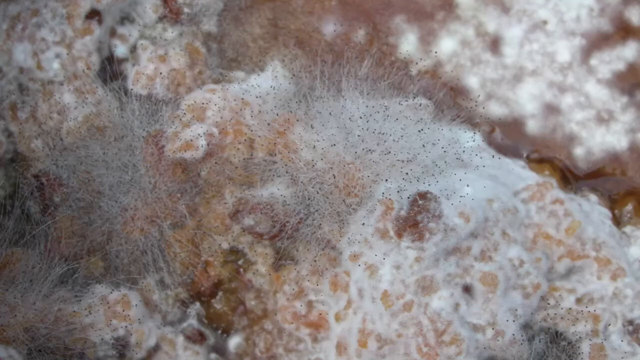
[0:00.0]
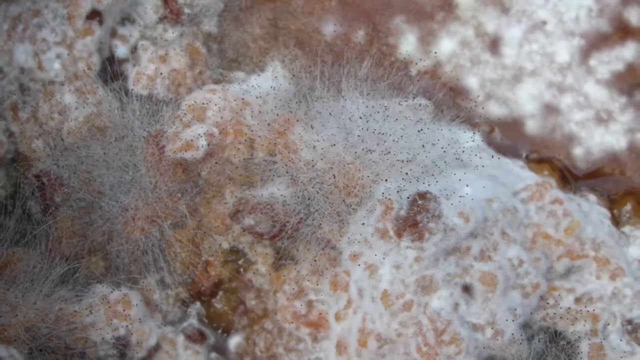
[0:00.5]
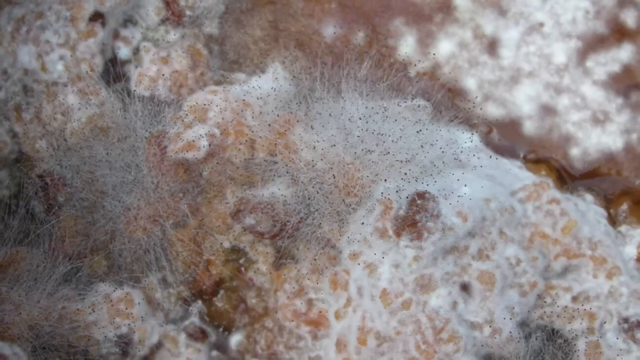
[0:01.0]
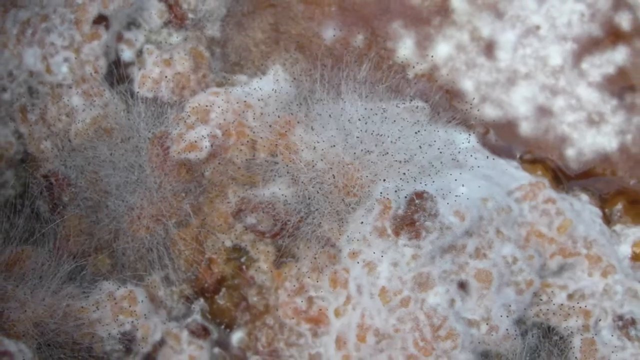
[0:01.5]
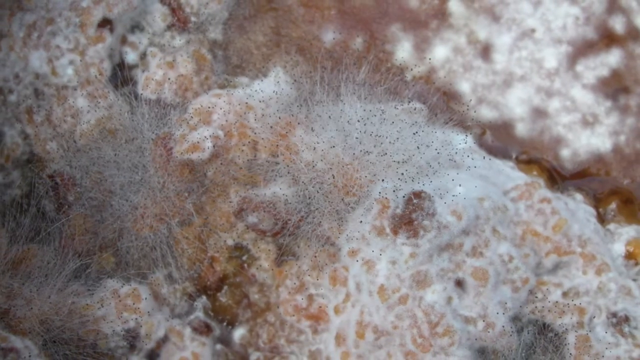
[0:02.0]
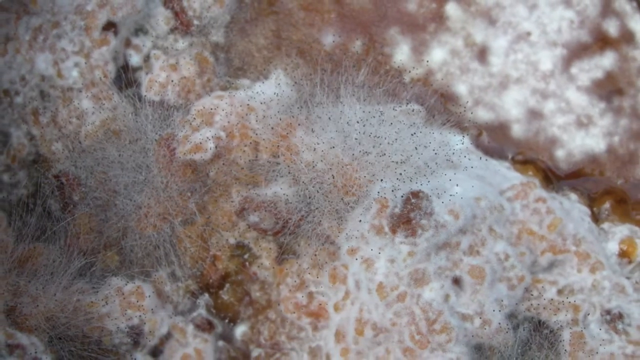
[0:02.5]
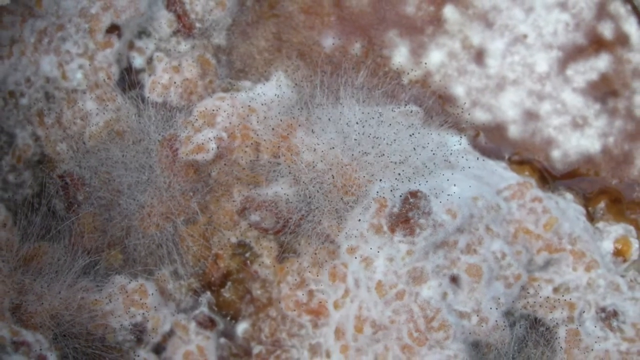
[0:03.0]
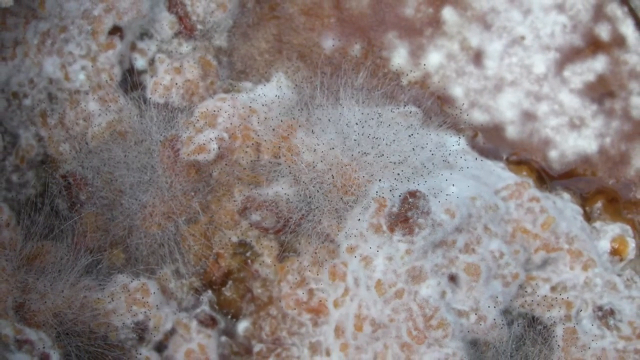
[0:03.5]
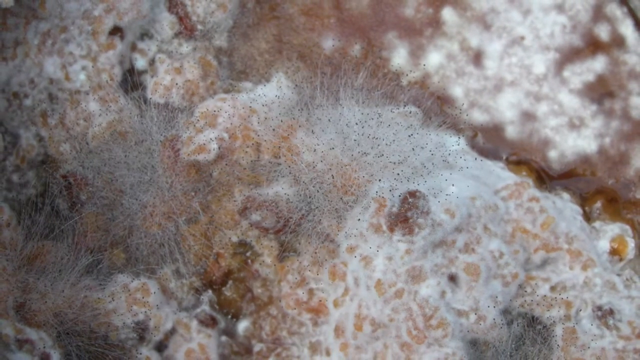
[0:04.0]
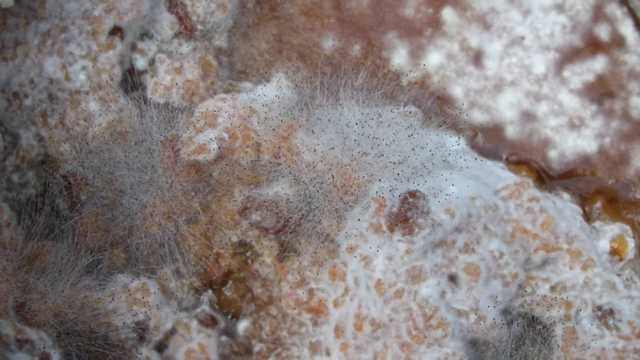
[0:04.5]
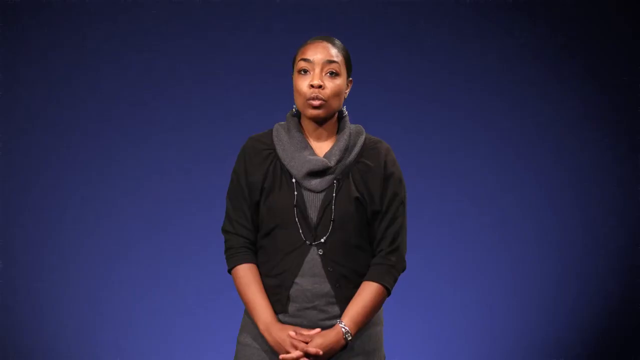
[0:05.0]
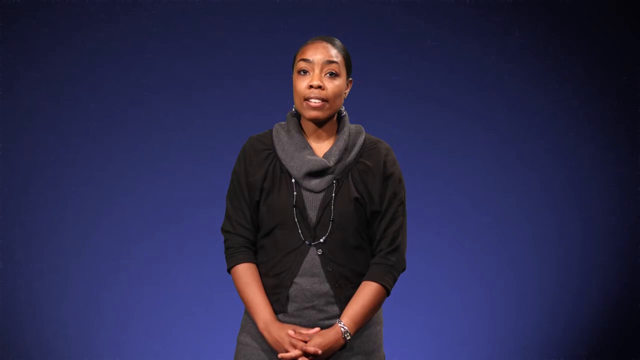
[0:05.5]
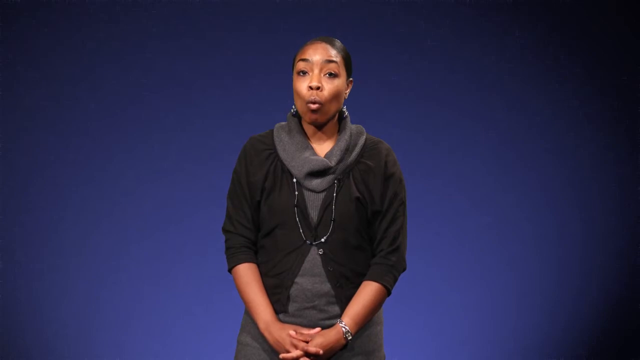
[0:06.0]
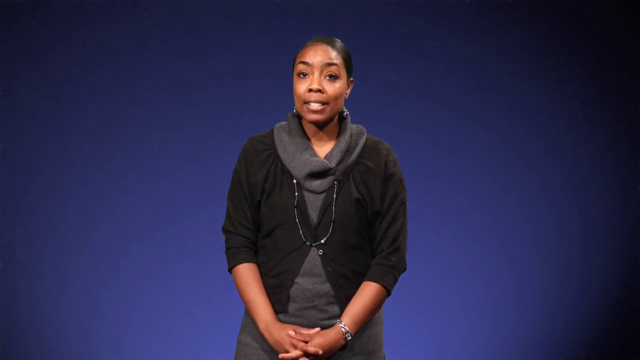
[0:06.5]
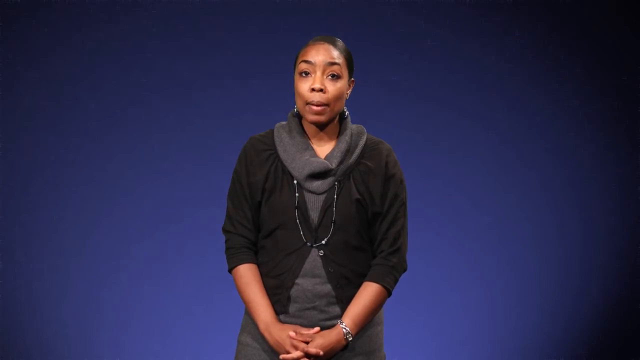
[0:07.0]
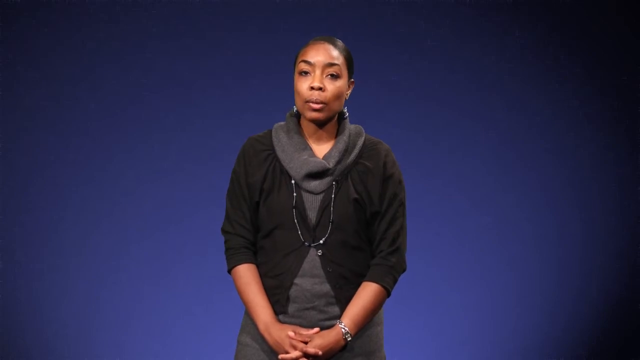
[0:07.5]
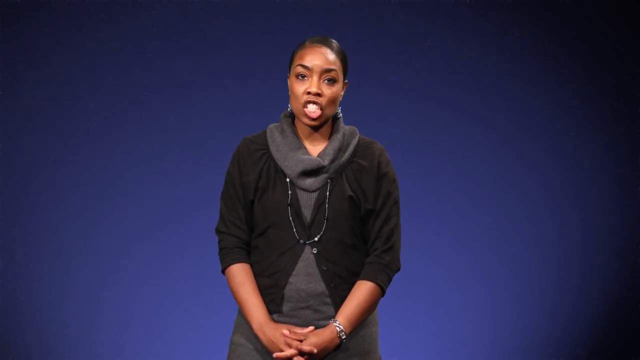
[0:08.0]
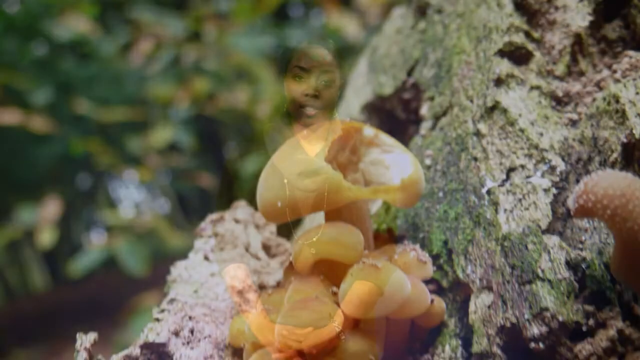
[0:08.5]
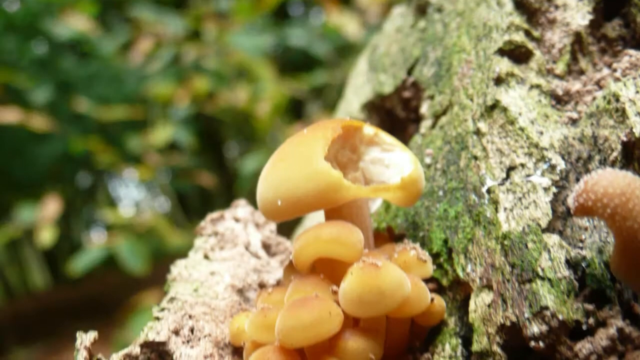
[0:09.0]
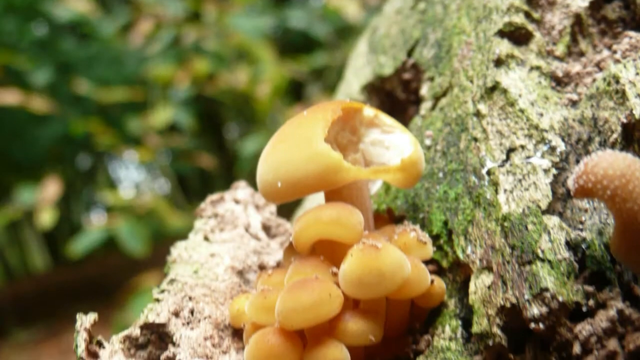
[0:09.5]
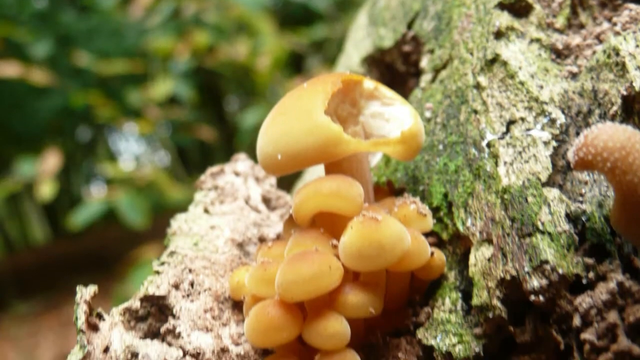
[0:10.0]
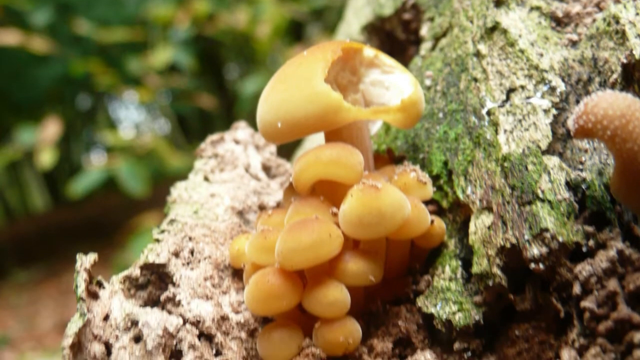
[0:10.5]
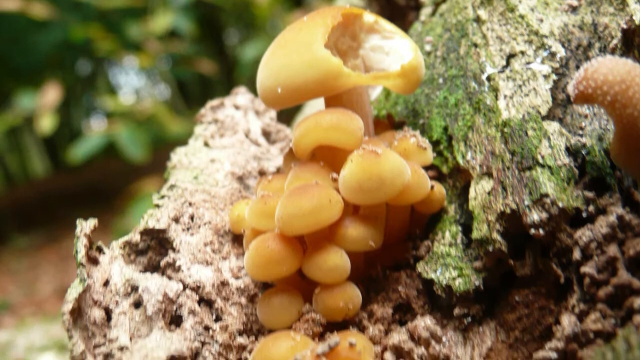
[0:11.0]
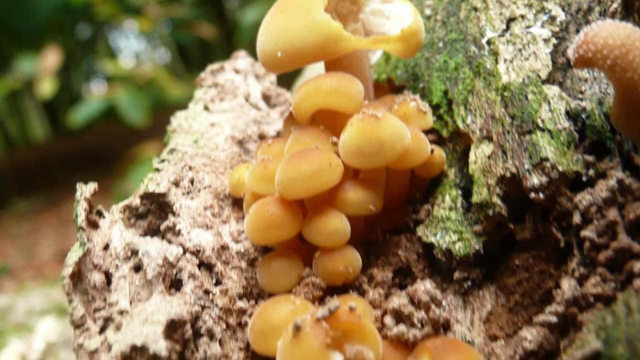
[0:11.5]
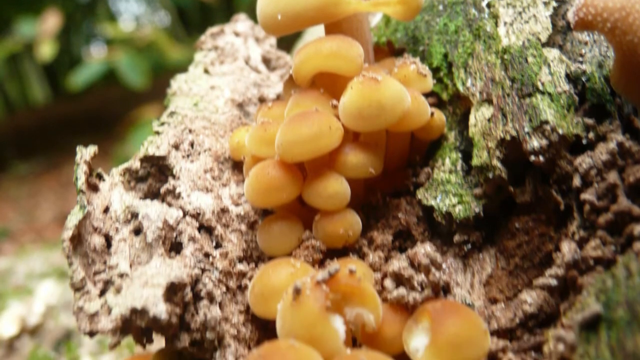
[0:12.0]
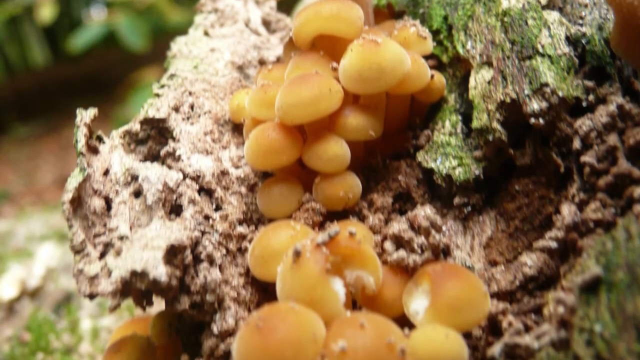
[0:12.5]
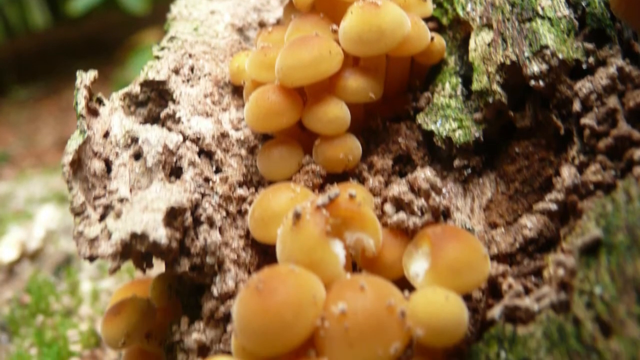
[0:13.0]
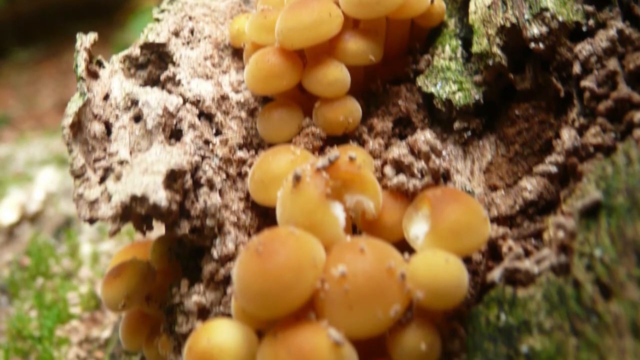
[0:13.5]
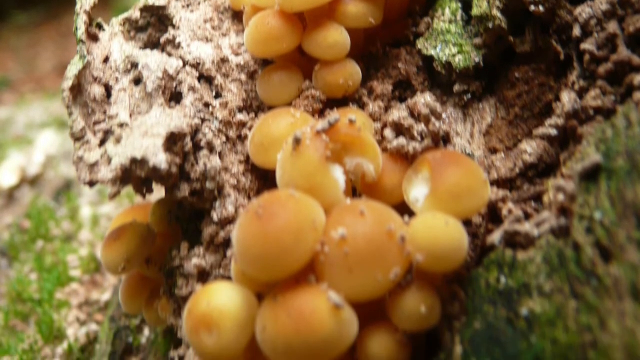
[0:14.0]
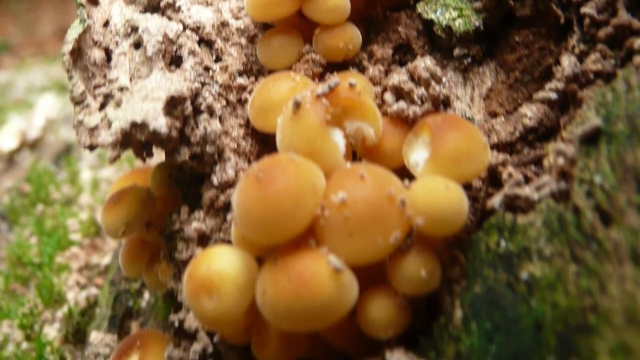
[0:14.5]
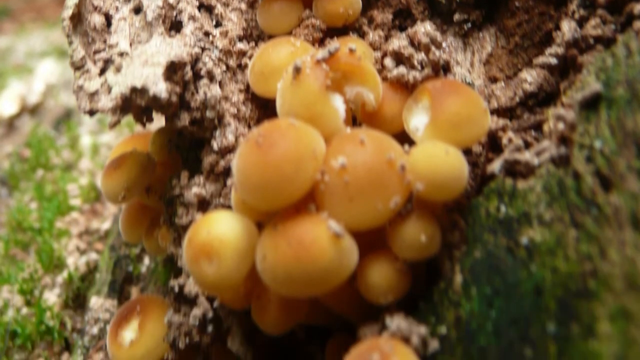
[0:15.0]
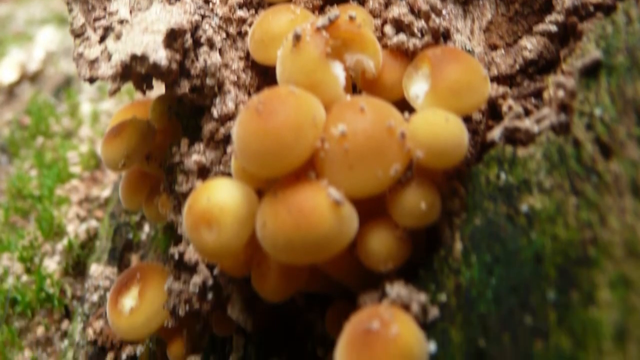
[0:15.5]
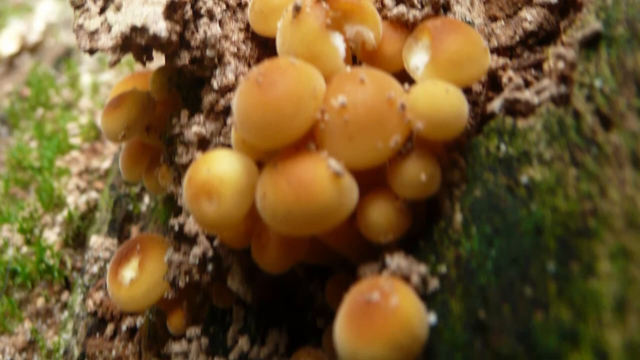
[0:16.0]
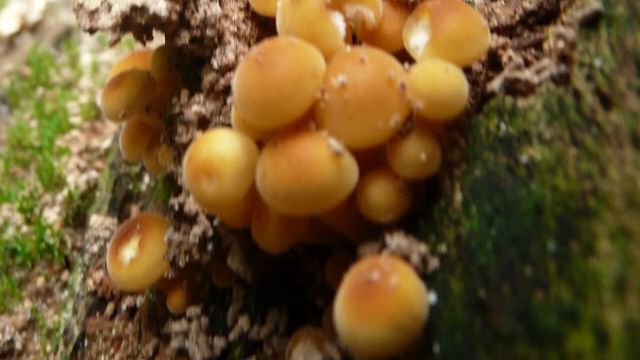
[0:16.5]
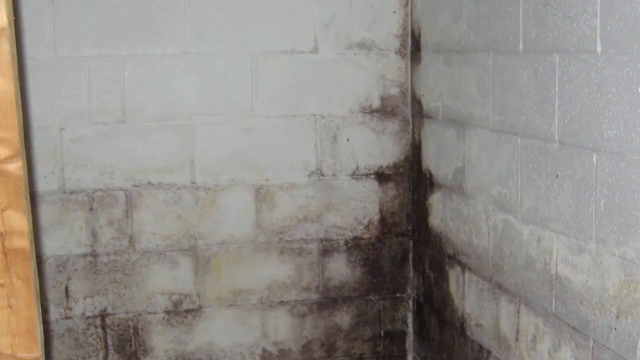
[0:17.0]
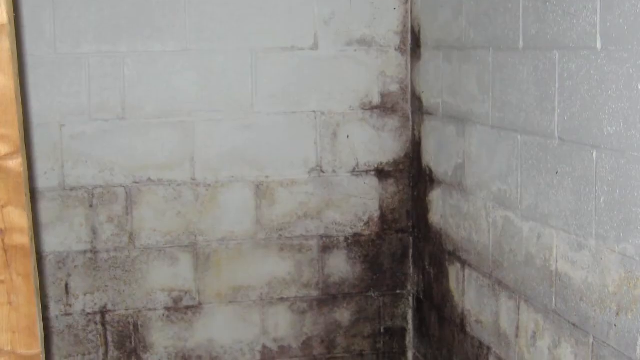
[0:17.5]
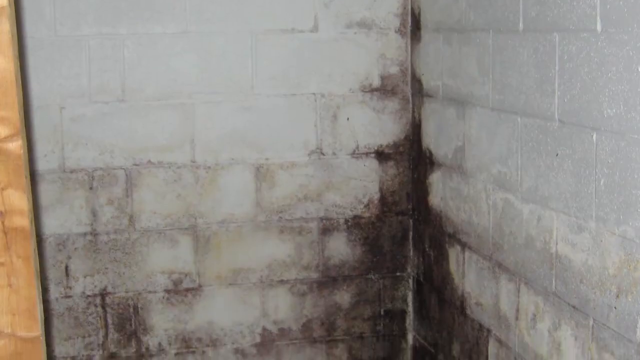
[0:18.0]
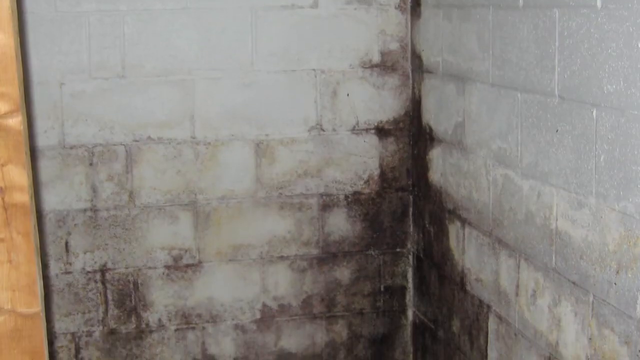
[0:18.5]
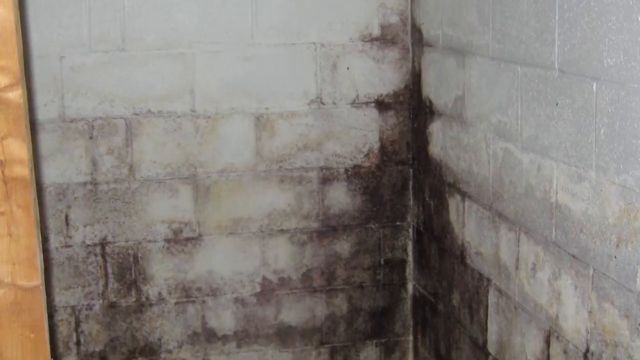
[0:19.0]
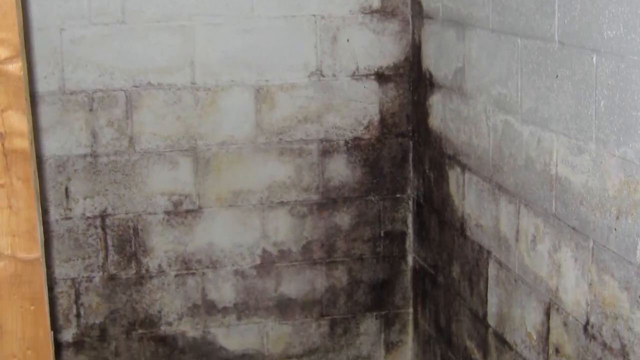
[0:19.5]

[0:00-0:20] The video opens on an extreme close-up of what looks like a pile of decaying matter, perhaps mold. The image is so zoomed in that it is difficult to tell exactly what it is: there are splotches of pink, white and orange with some fuzzy particles that look like they could be mold, and it almost resembles a close-up of a seashell. An African-American woman then appears, speaking. She wears a black cardigan sweater pushed up to her forearms over a grey shirt with a frilly collar, and a necklace that looks to be silver with black beads. Her hair is drawn back, she wears earrings, and she has a serious expression and seems to be explaining something. The video cuts to a picture of a decaying tree that seems to have orange mushrooms growing out of it, with green grass to the left and right.